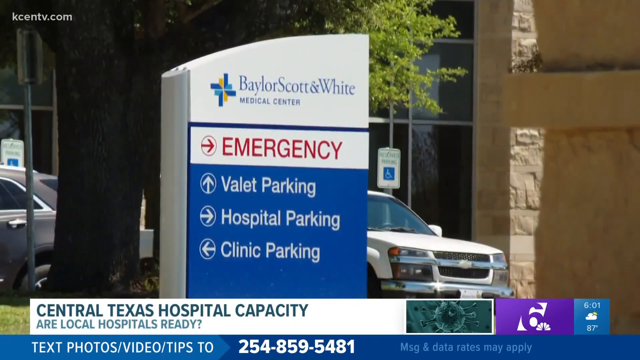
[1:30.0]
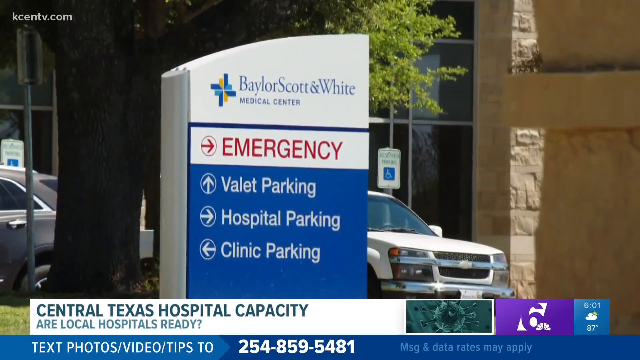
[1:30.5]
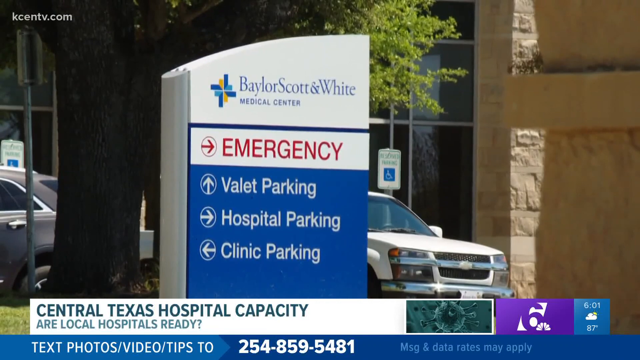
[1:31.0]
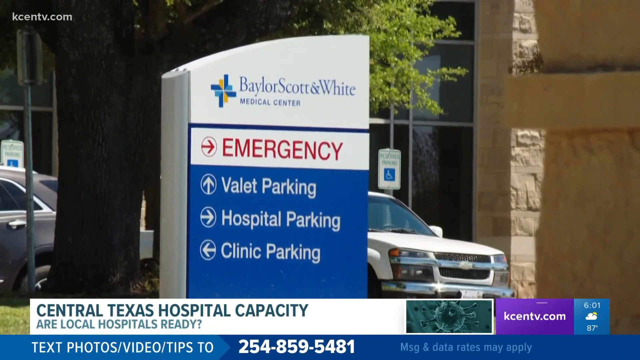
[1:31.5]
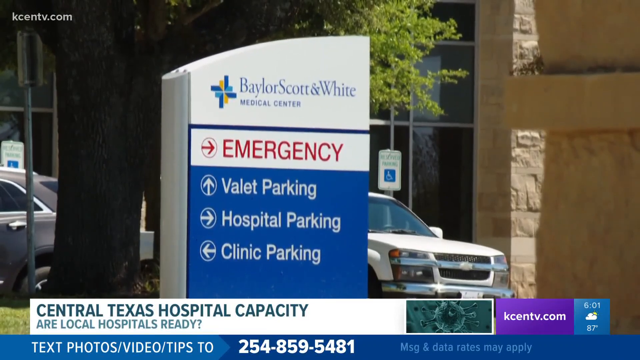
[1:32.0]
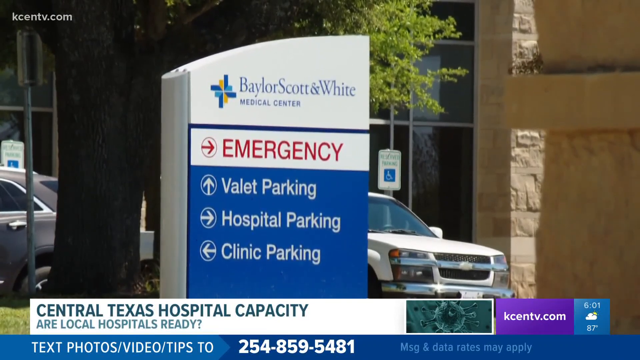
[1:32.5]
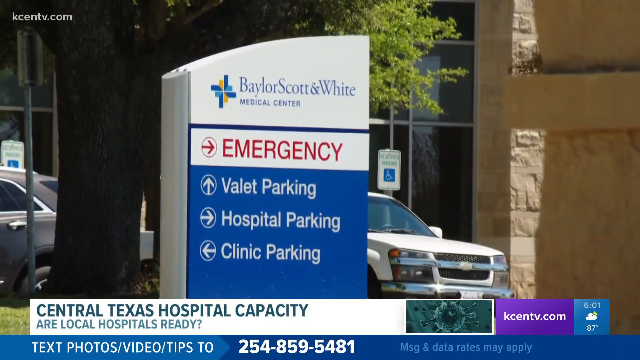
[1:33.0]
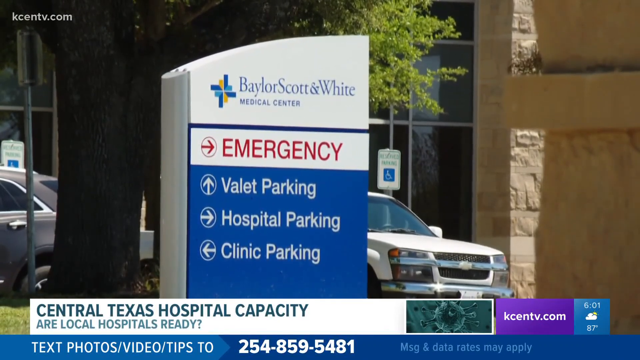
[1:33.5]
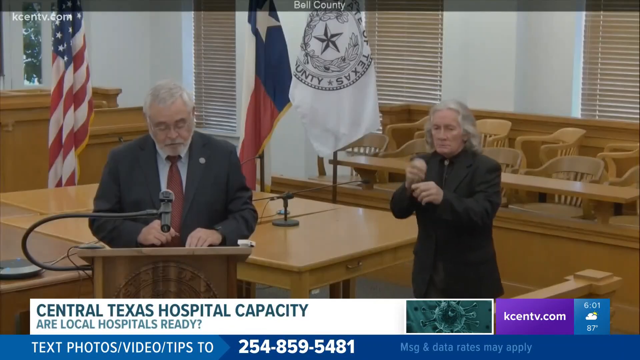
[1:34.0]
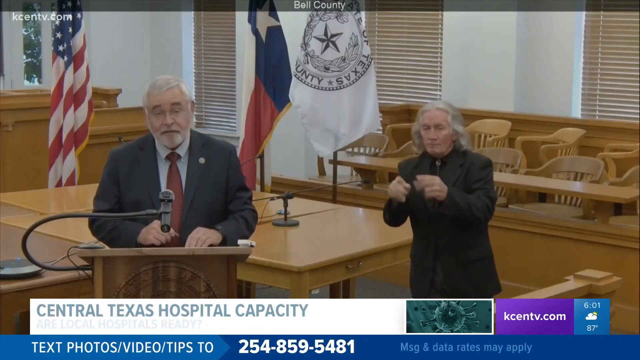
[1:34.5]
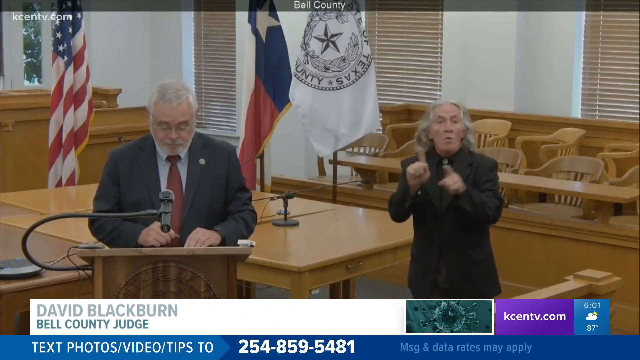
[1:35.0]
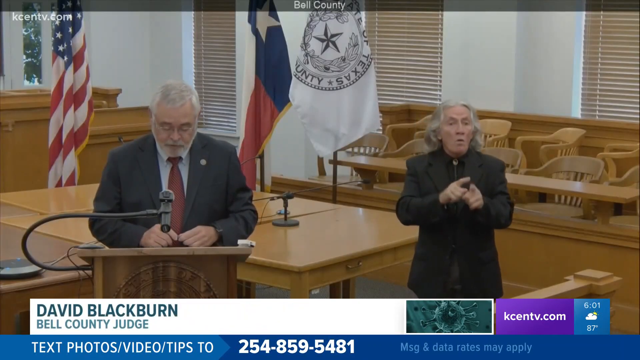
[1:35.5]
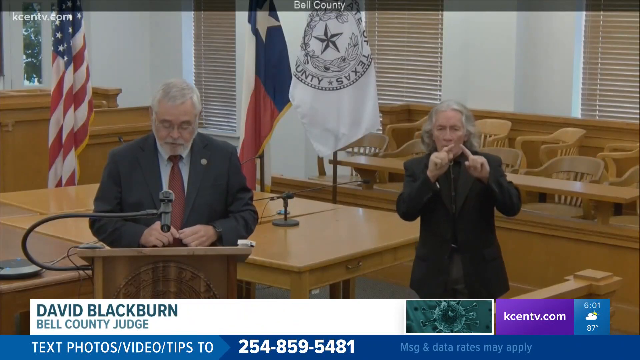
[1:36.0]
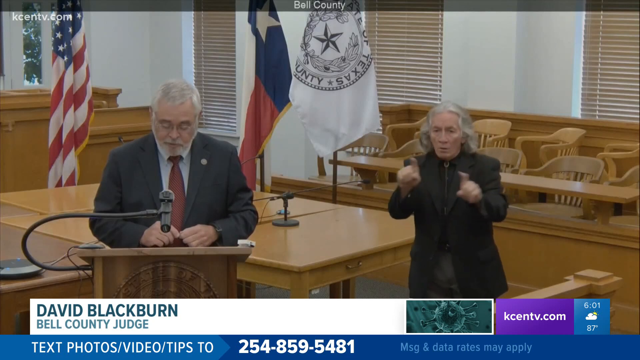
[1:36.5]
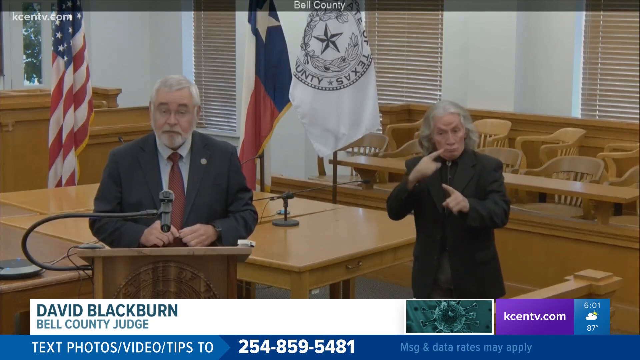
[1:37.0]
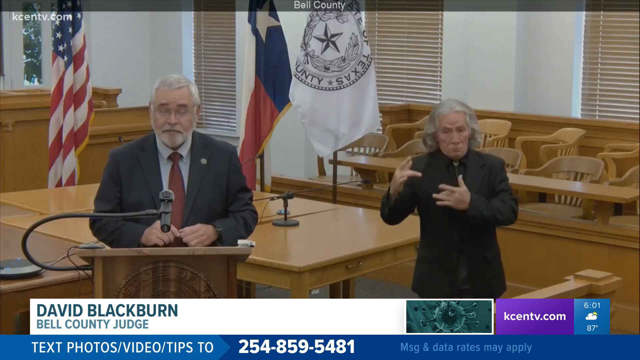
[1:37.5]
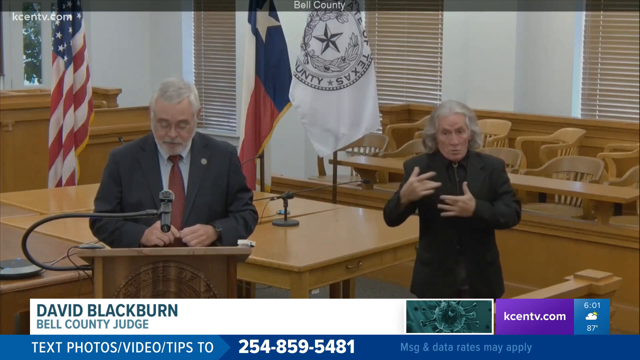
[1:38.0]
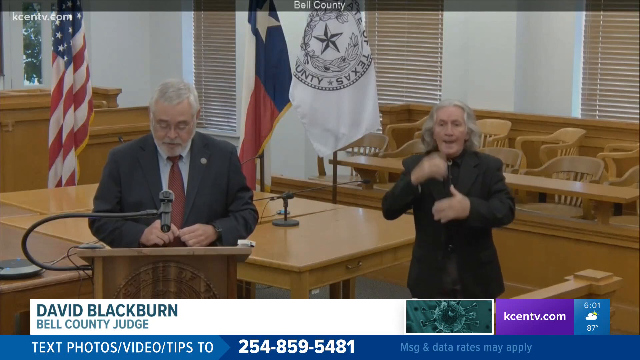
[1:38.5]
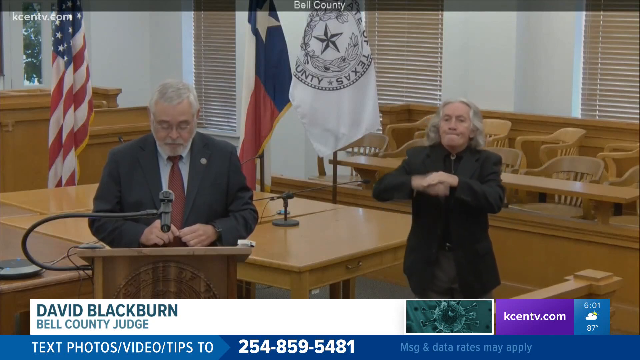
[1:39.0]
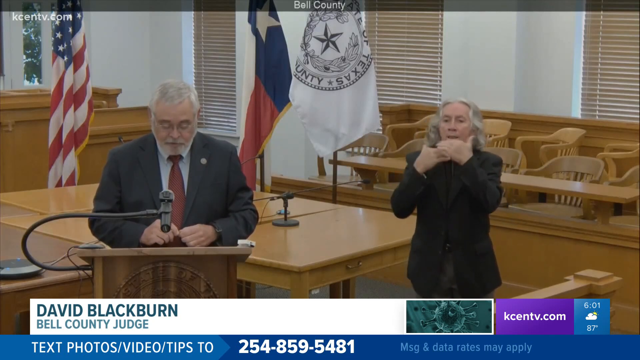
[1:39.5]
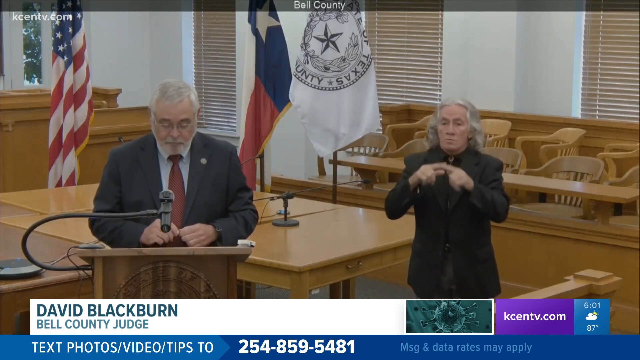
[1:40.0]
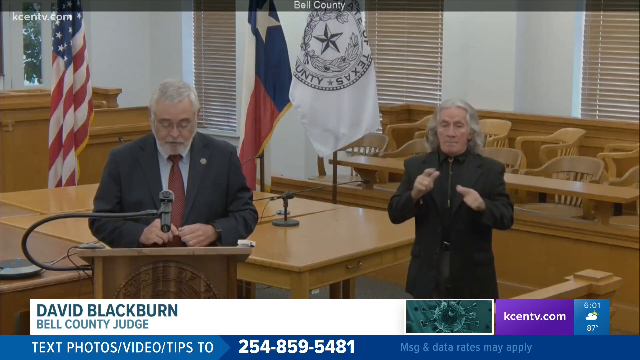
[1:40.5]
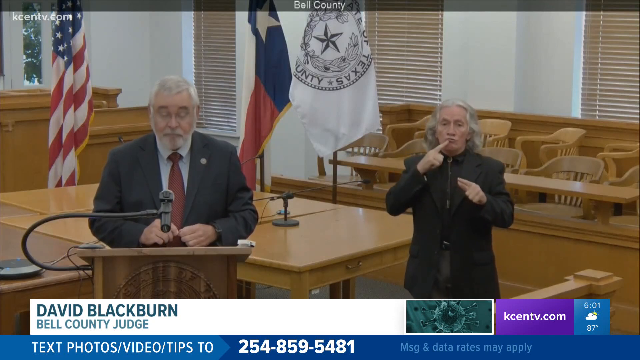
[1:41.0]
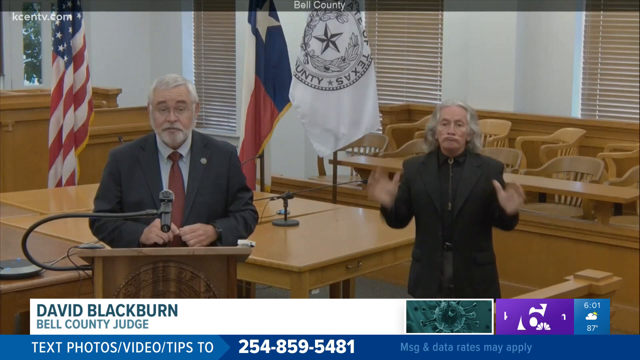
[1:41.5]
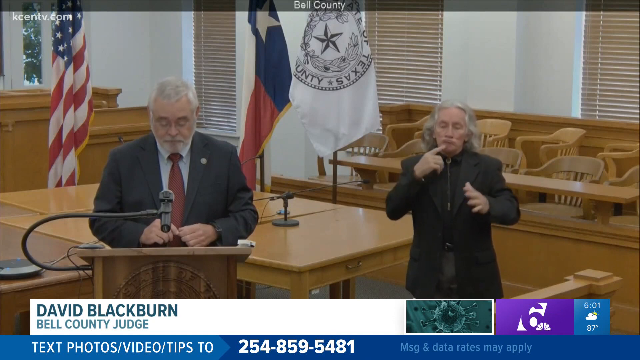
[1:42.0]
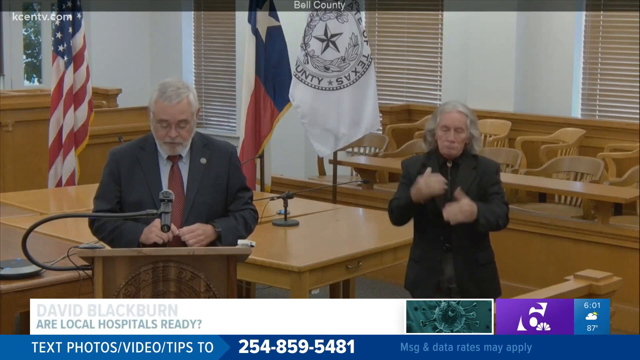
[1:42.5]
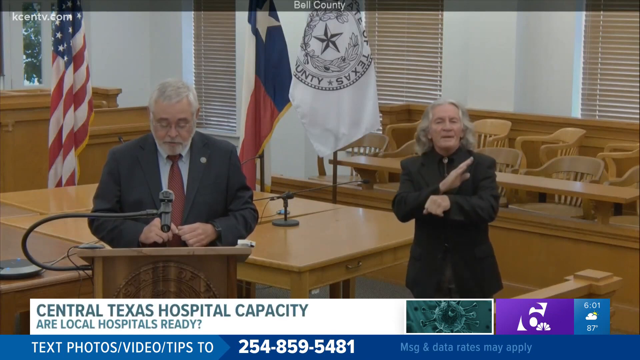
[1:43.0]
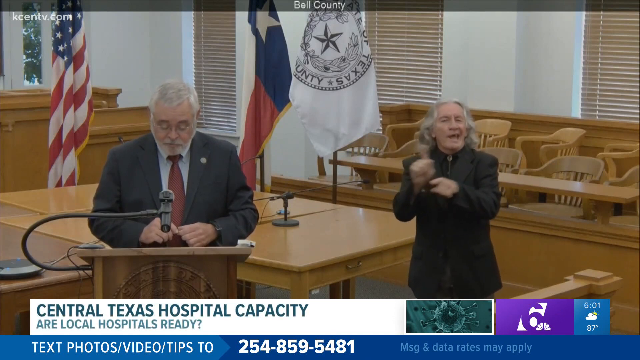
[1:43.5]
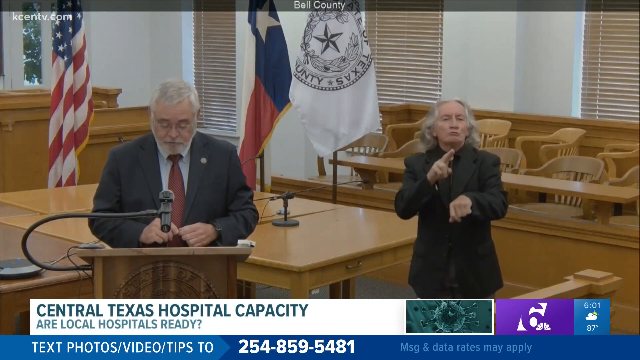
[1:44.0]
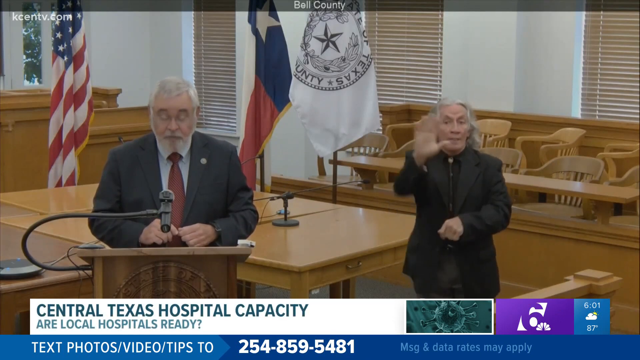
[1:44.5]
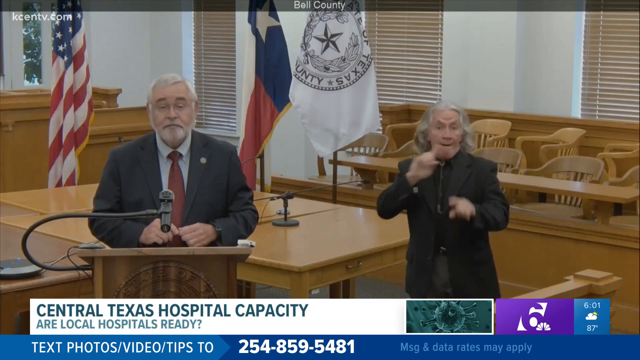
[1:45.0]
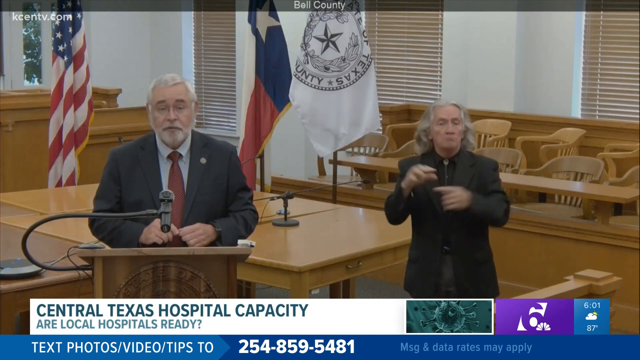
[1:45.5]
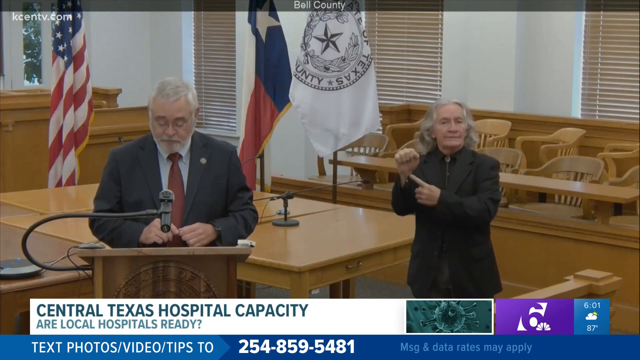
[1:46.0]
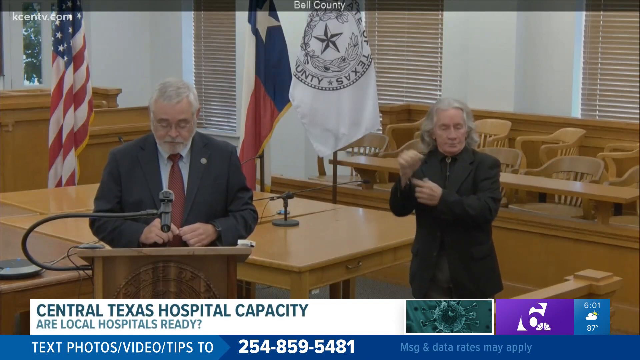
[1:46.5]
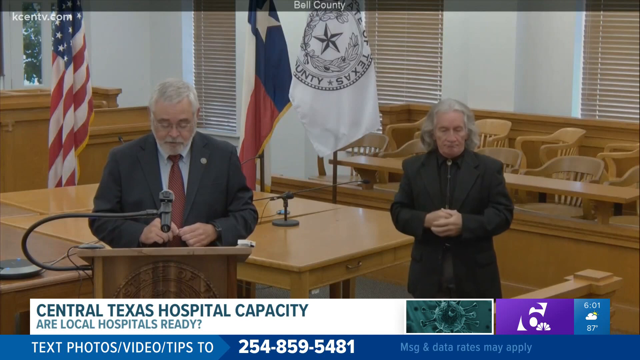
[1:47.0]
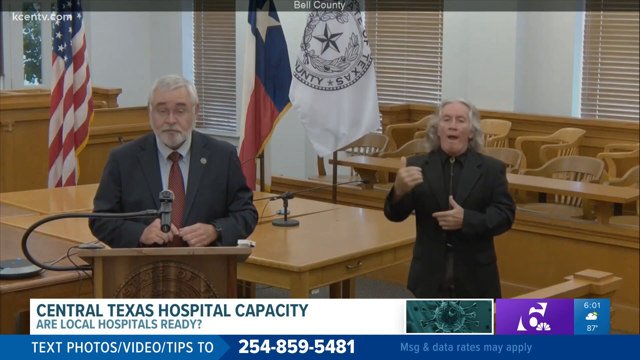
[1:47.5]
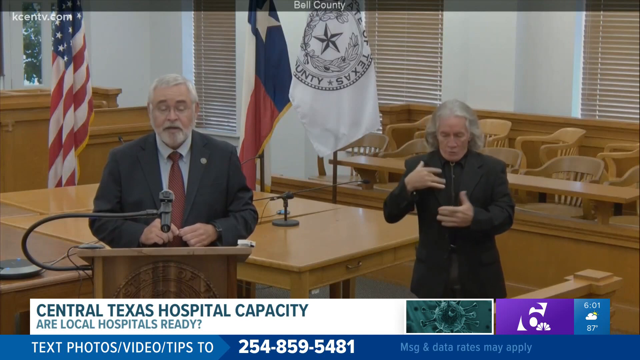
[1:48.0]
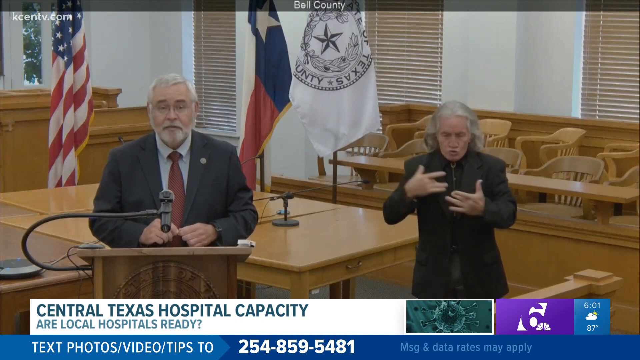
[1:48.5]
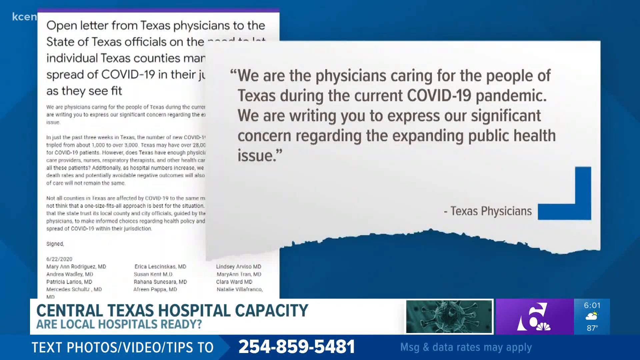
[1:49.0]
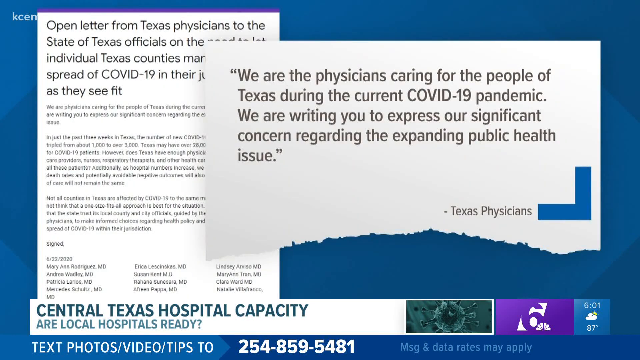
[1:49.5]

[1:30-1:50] The video starts on the hospital's emergency and parking sign. It then appears to go to a room where a man speaks at a podium while a woman a few feet away from him interprets in sign language. The bottom of the screen shows David Blackburn, the Bell County judge. He is an older man with mostly gray hair and a very big mustache, likely in his 60s, possibly close to 70, with small eyes, wearing a black suit, what looks like a white shirt and a red tie. The woman is also older, with a lot of gray hair, maybe in her 70s, wearing a long black coat or a black blazer. The room looks like some kind of courtroom, with a large wooden desk, a bench and some chairs, and almost looks like a booth where a jury would sit. There are several windows, all with the blinds down, and a couple of flags: an American flag, a flag that appears to have "Texas County" on it, and next to it a blue and red flag with a white star, apparently the Texas flag; perhaps there is a county flag as well. He stands at a brown wooden podium with a microphone perched right by him. He mostly has a neutral expression and looks up and down, maybe reading, staying fairly still. The interpreter moves her head, rolls her hands a little and touches her mouth a little as she signs. At the very end, quotations from Texas physicians appear.